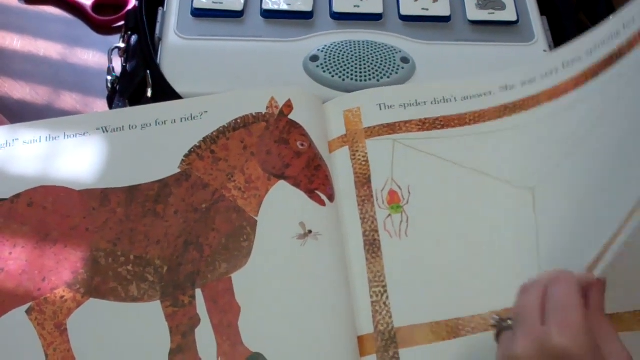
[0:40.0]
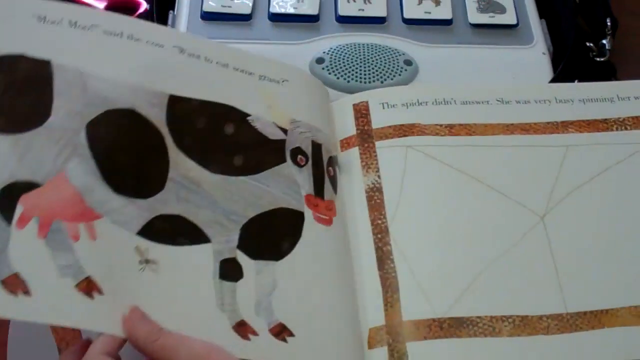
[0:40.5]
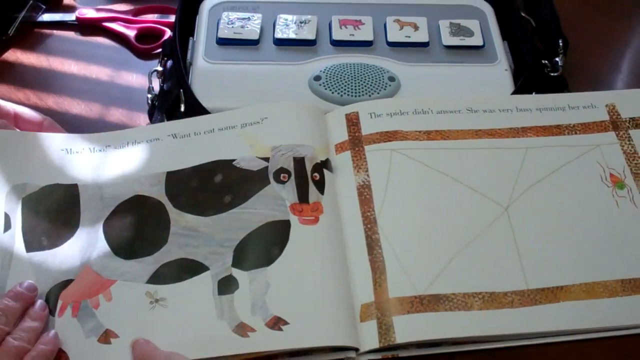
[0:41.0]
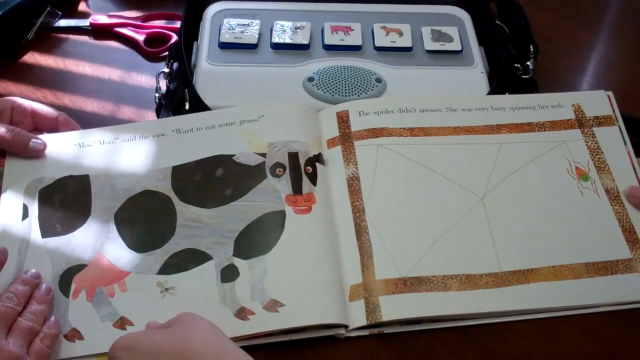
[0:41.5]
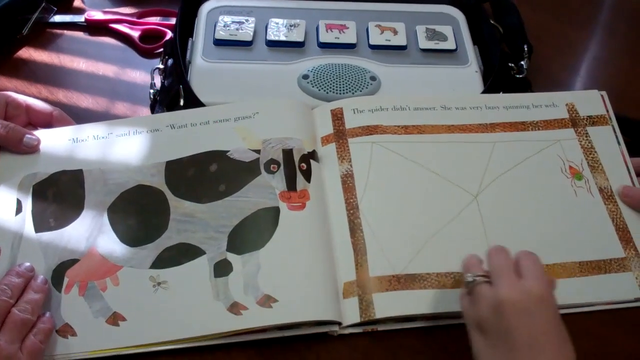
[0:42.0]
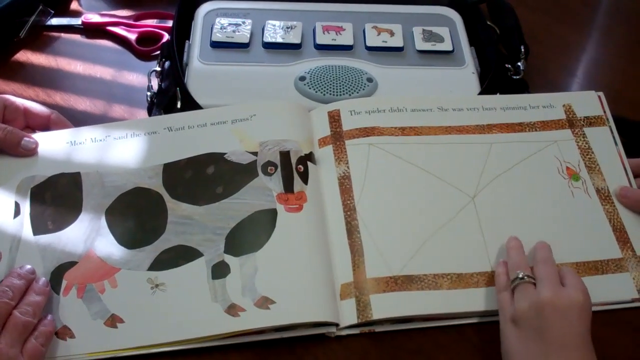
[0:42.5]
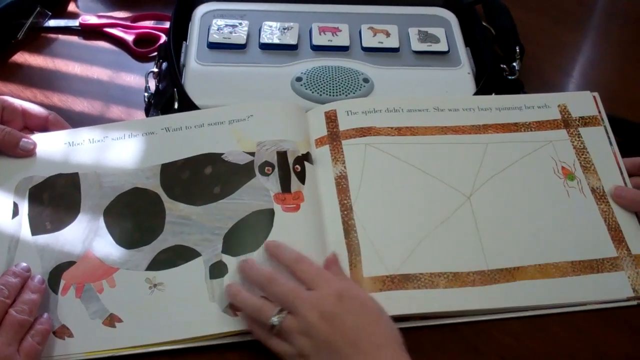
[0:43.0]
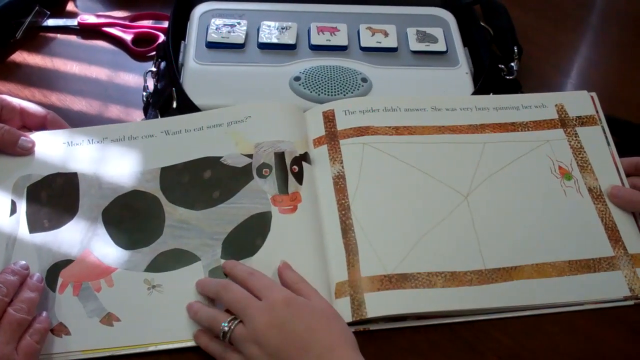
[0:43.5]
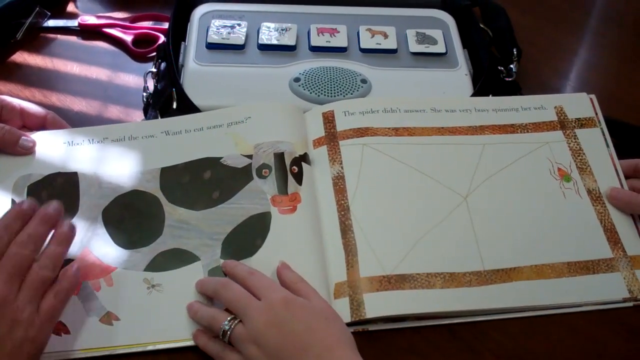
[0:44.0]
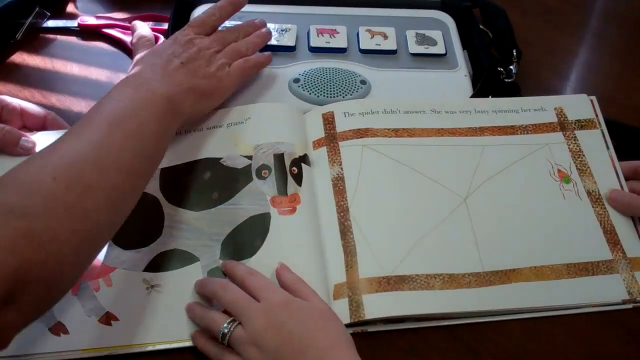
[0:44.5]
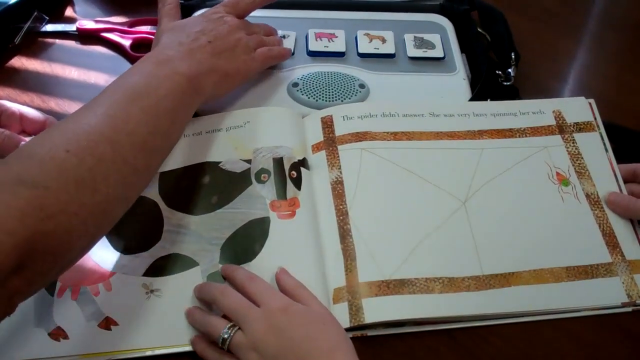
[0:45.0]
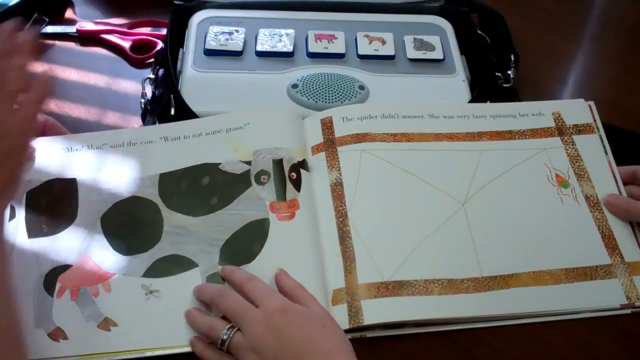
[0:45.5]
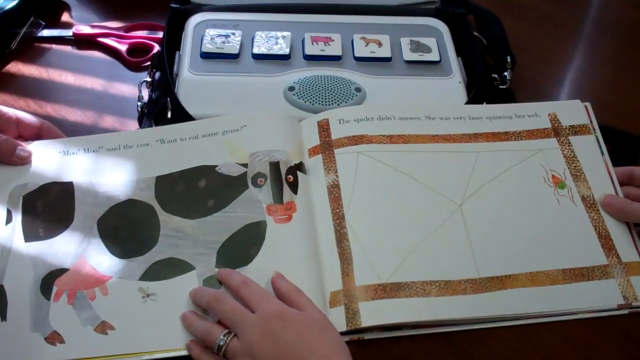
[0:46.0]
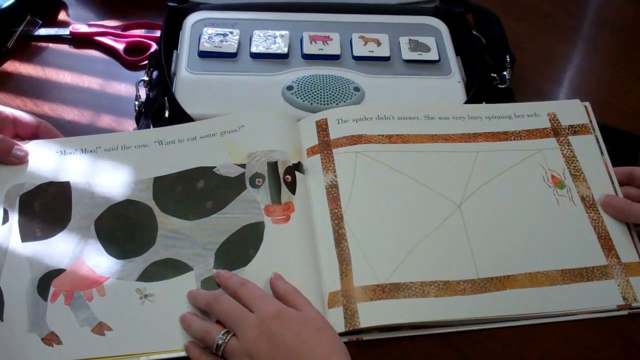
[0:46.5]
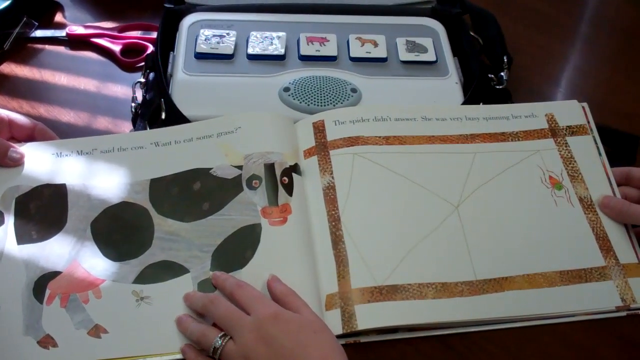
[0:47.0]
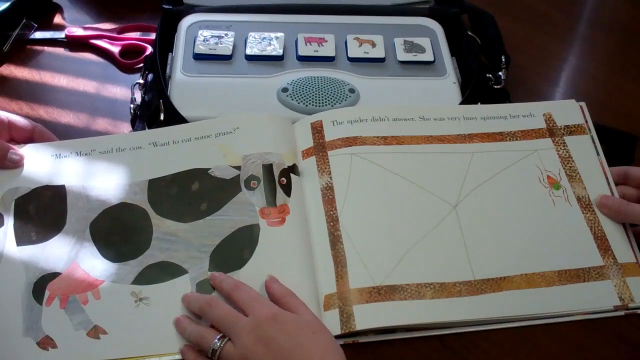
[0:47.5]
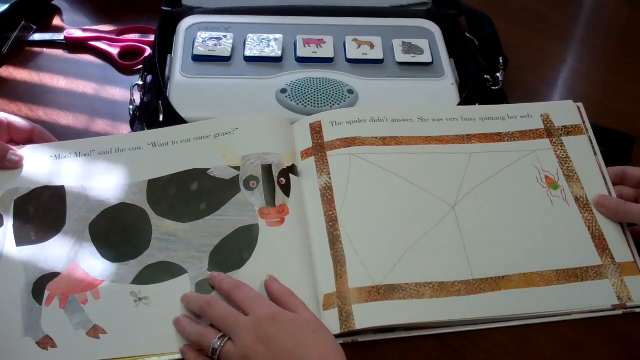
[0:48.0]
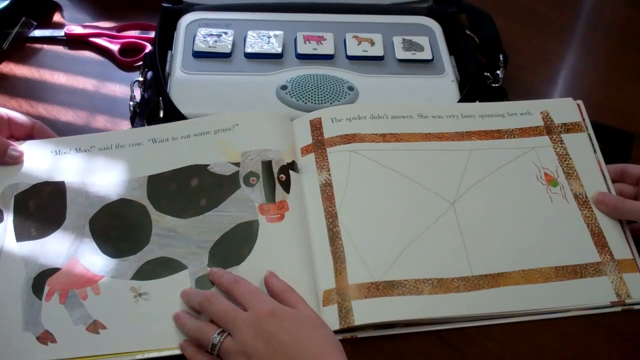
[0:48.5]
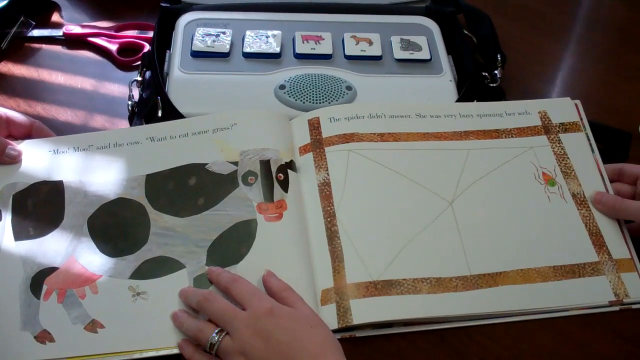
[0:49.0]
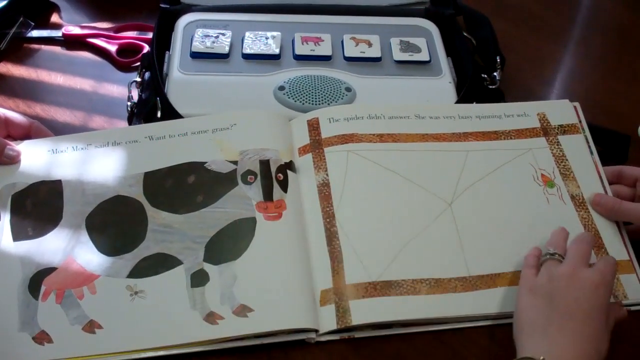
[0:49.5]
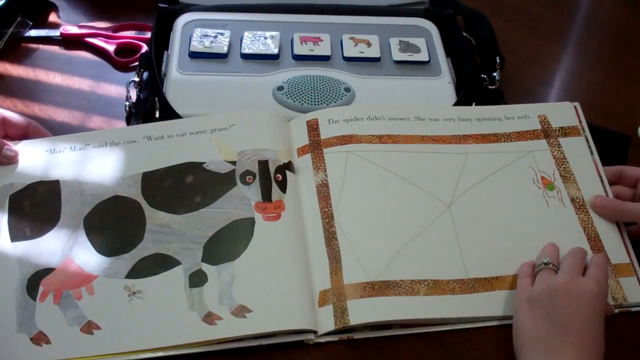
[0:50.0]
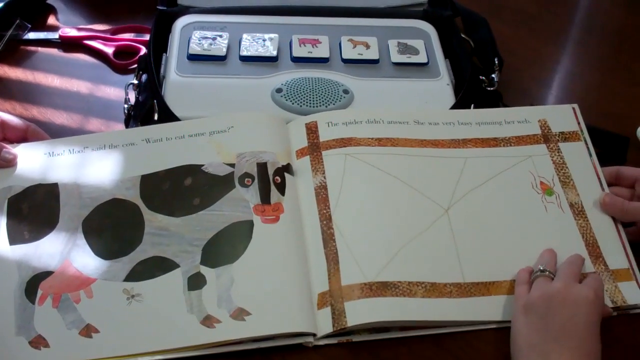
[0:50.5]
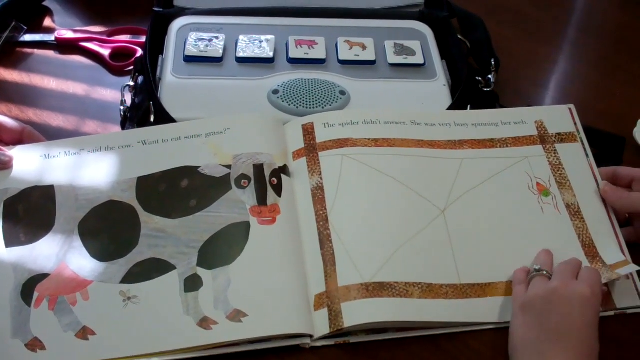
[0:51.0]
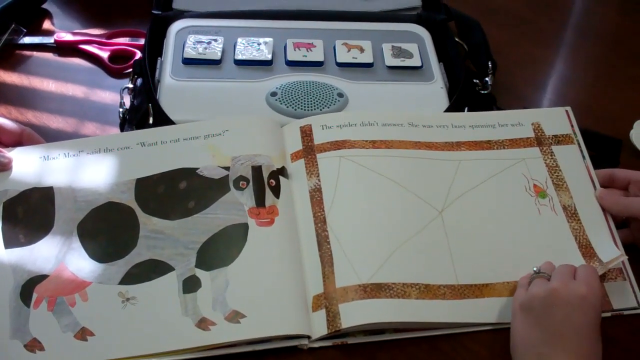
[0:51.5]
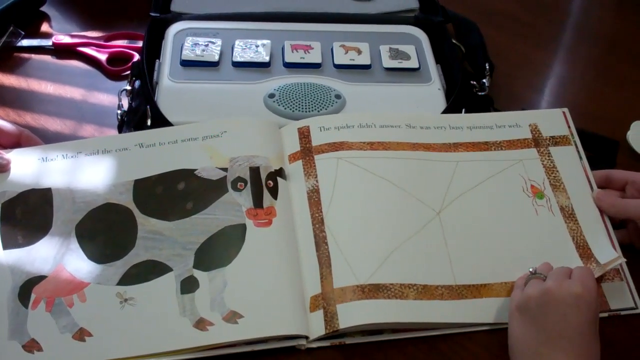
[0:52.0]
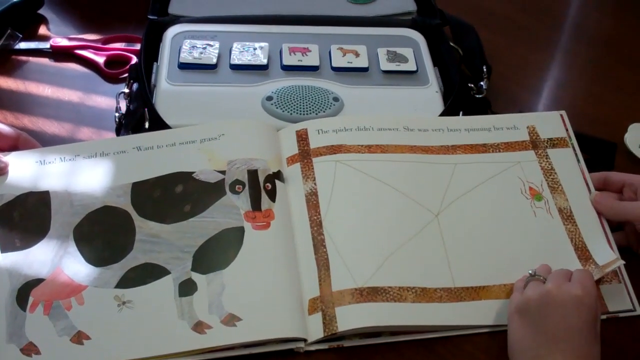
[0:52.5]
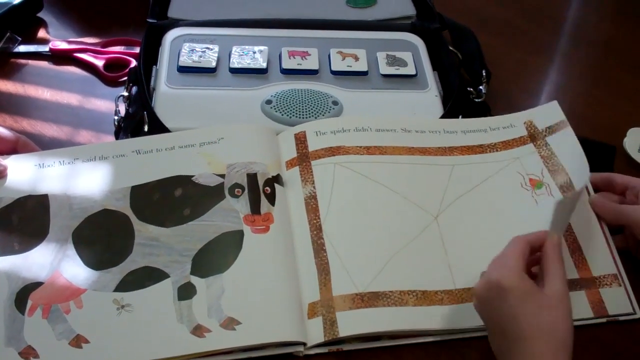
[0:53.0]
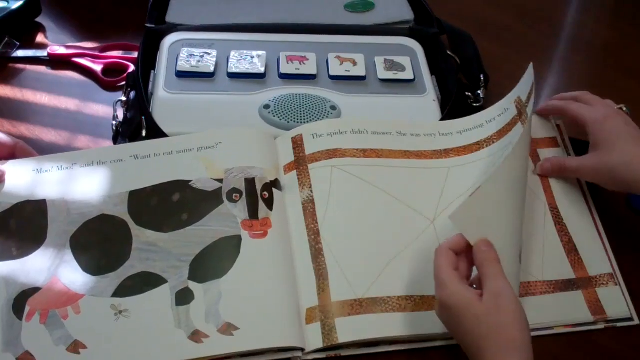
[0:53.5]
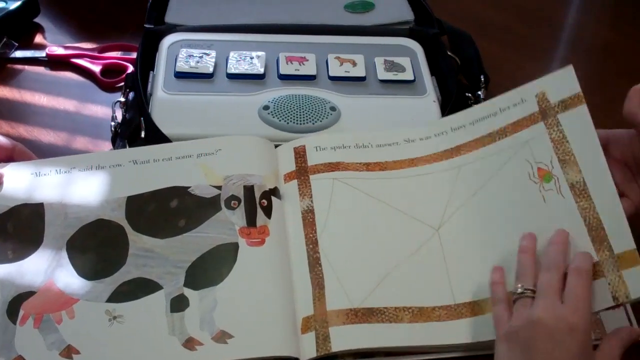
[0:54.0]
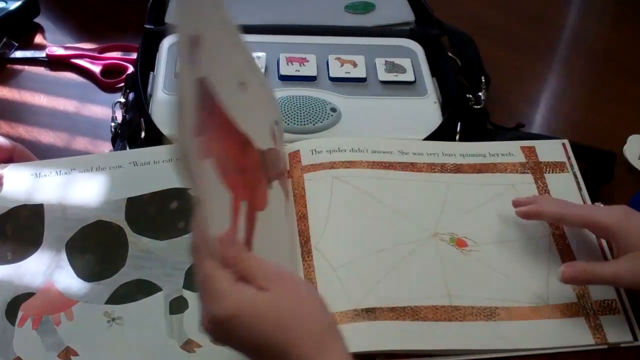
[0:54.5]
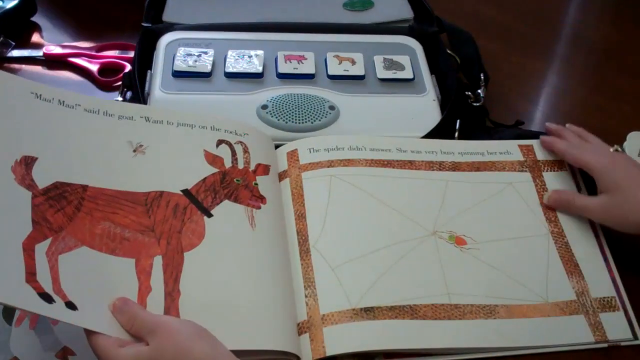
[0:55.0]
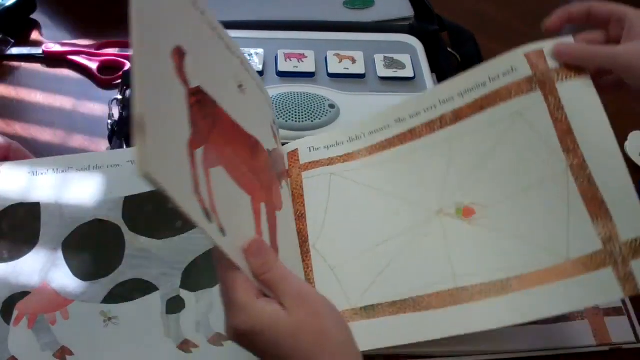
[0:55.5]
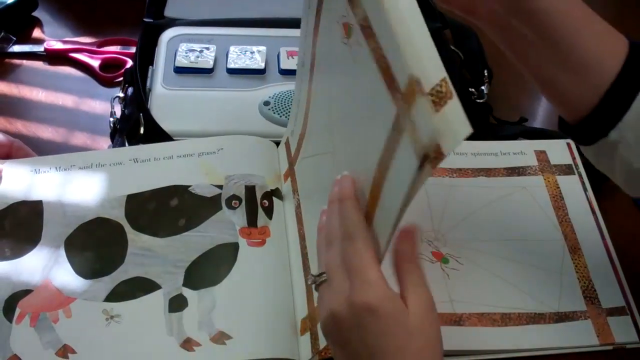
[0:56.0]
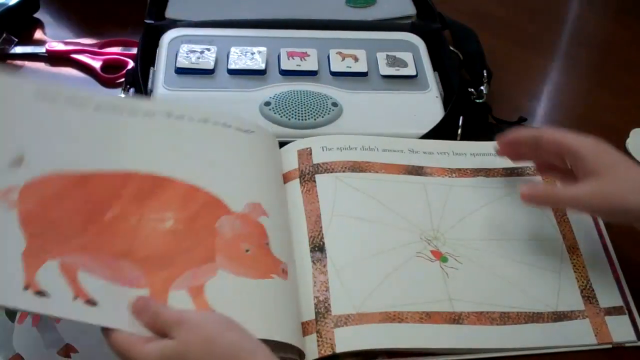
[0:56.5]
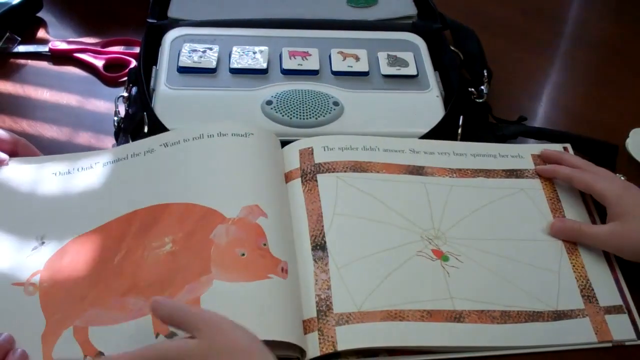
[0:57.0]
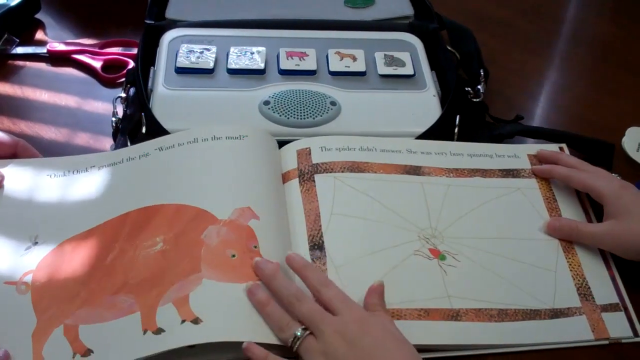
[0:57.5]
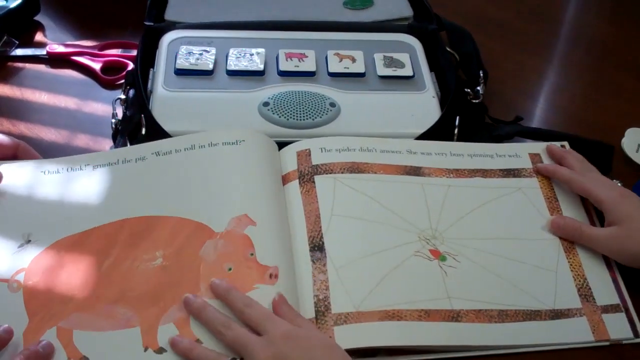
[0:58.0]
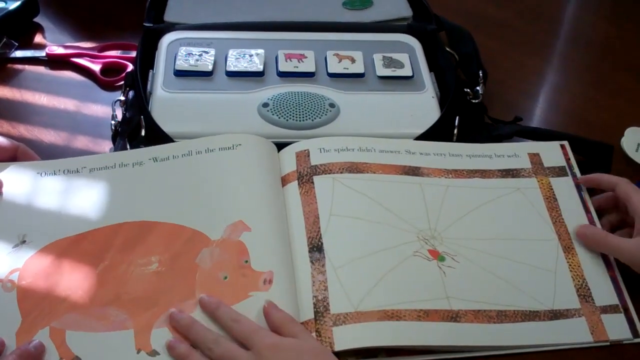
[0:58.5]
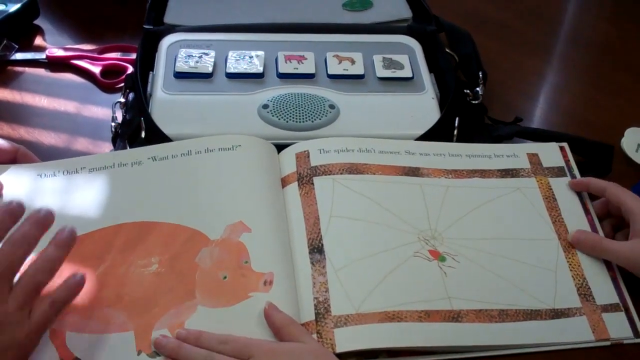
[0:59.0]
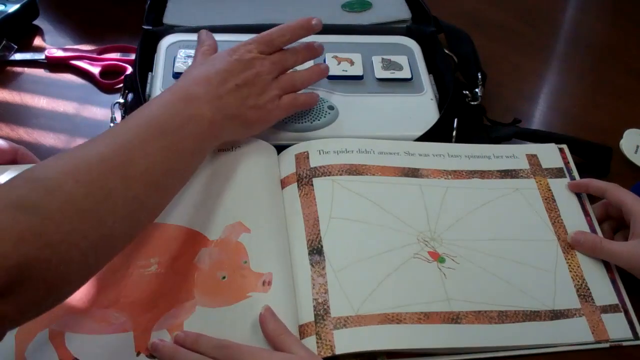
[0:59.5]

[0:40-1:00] The Eric Carle book is open to a page with a horse on the left-hand side and the text "Nay, said the horse, want to go for a ride." On the right-hand page, a spider hangs from a fence post, spinning a web, with the text "The spider didn't answer. She was very busy spinning her web." The page turns to a cow on the left-hand side, with the text "Moo, moo, said the cow, want to eat some grass." On the right-hand side, the spider is on the other side of the fence post, still hanging as she spins the web, with the text "The spider didn't answer. She was very busy spinning her web." A hand reaches up and touches the picture of the cow on the console above the book. The person holding the book then flips forward a few pages and lands on a page with a goat, where the text reads in part "maa maa said the goat." The other page shows the spider with the text "The spider didn't answer. She was very busy spinning her web."